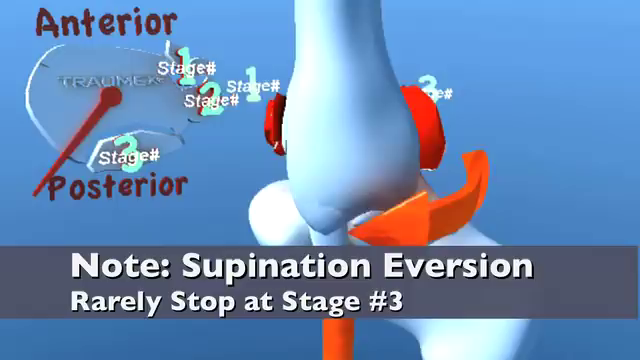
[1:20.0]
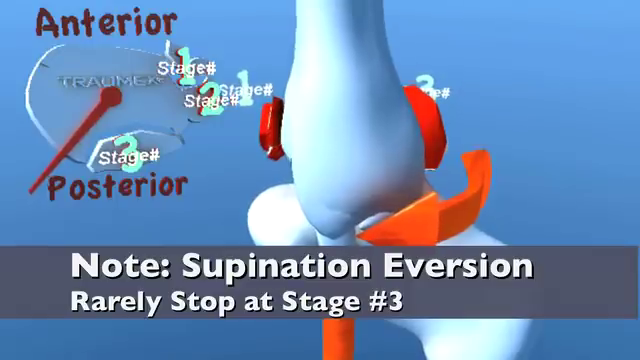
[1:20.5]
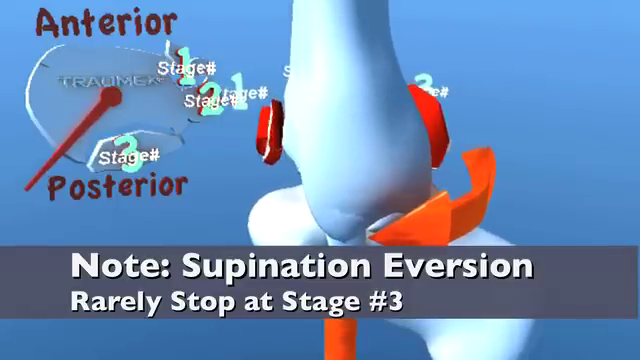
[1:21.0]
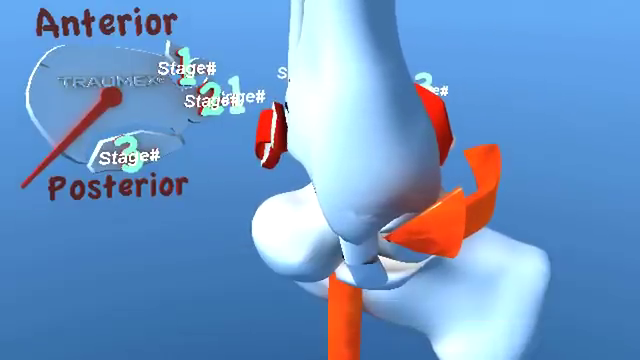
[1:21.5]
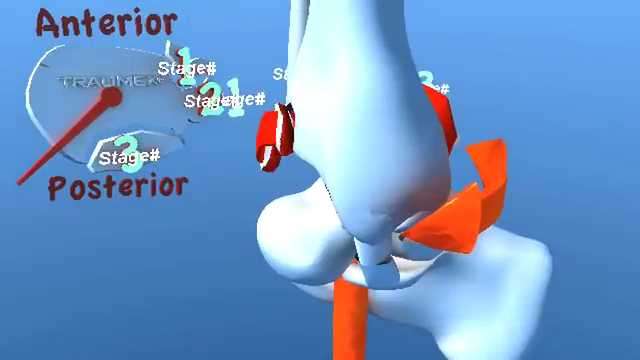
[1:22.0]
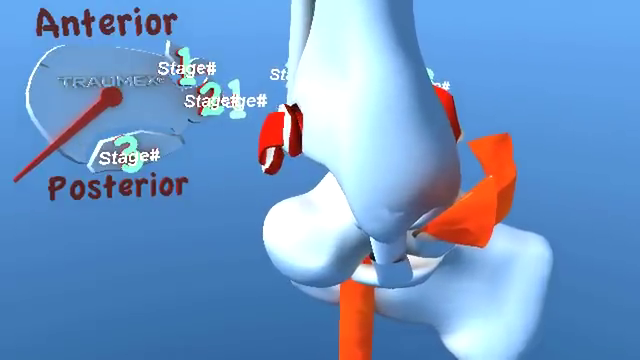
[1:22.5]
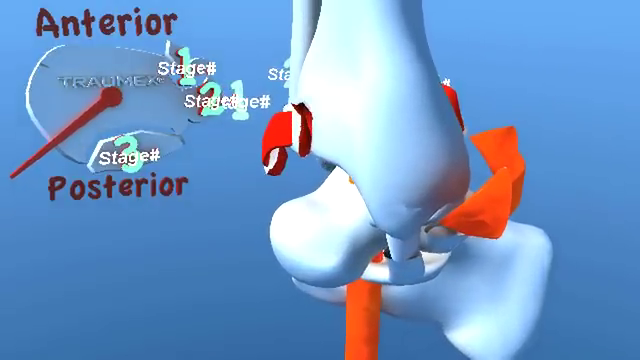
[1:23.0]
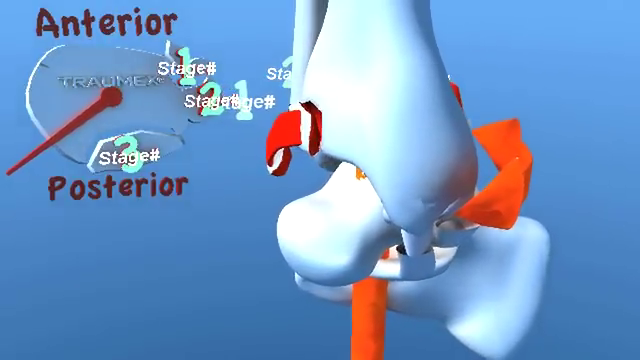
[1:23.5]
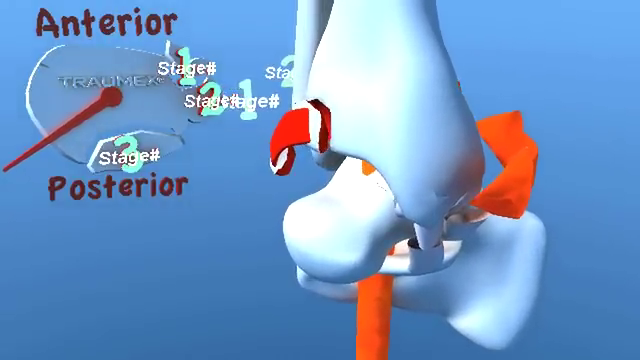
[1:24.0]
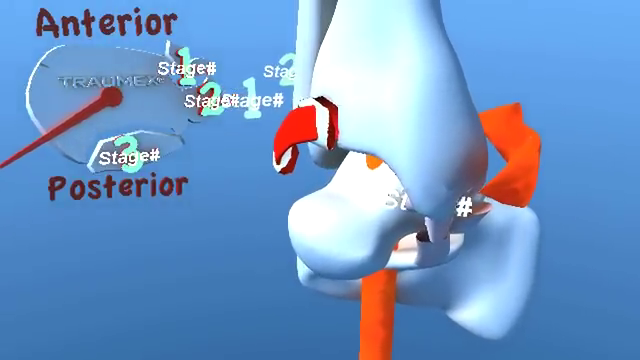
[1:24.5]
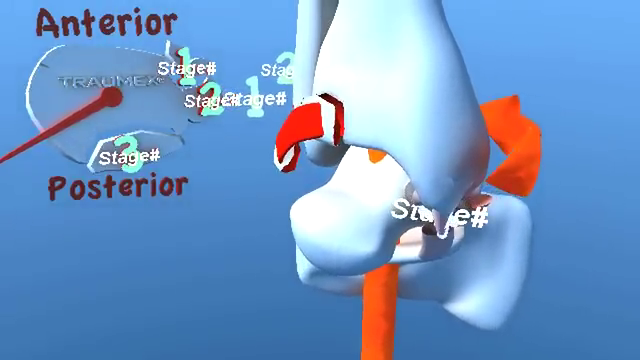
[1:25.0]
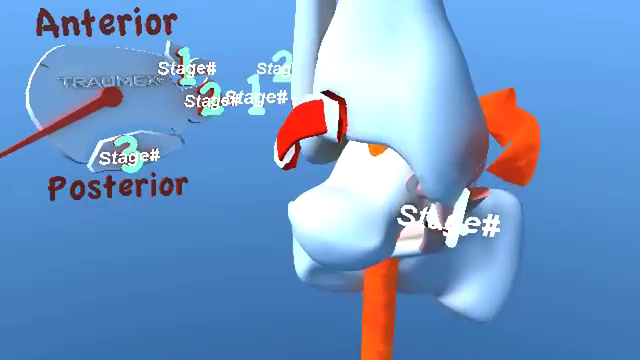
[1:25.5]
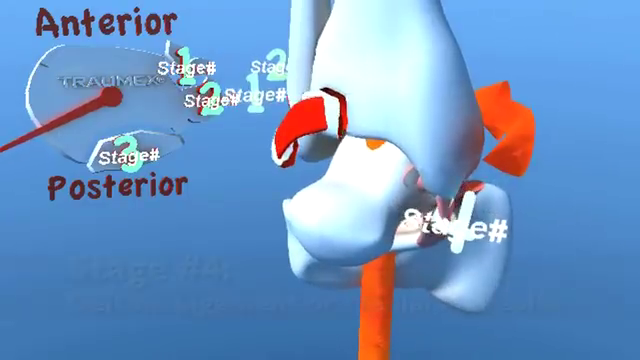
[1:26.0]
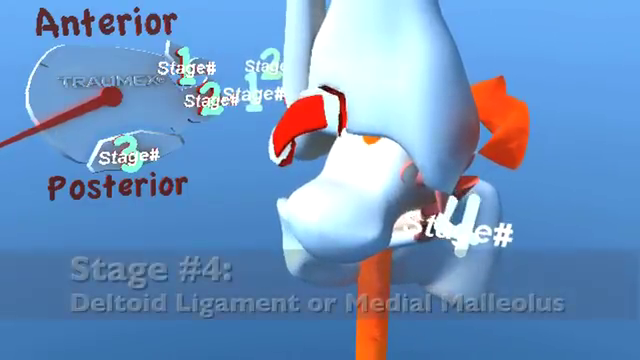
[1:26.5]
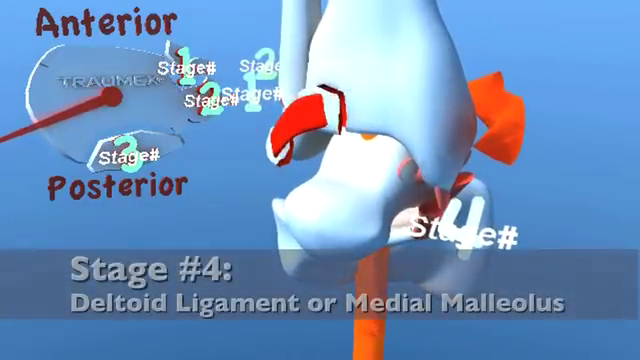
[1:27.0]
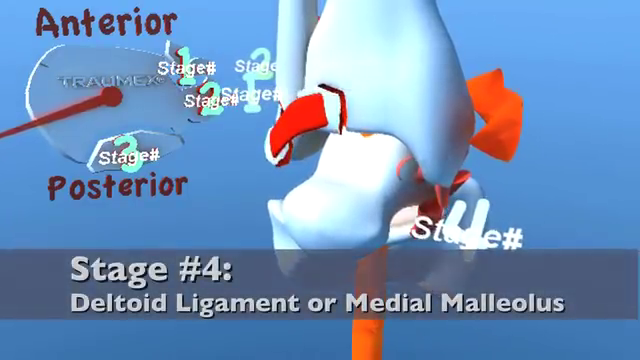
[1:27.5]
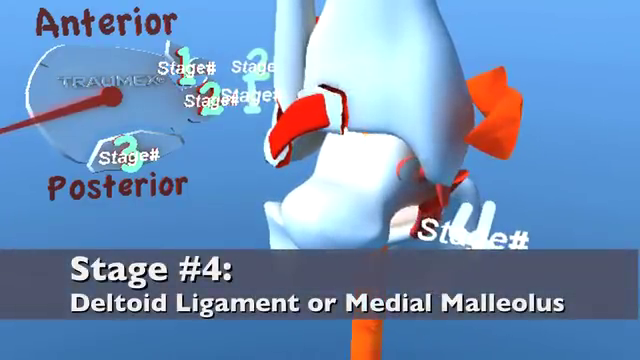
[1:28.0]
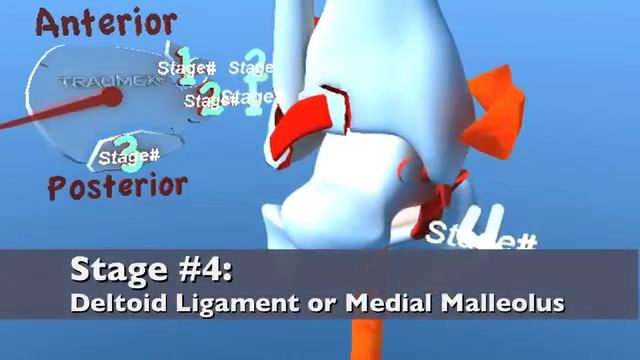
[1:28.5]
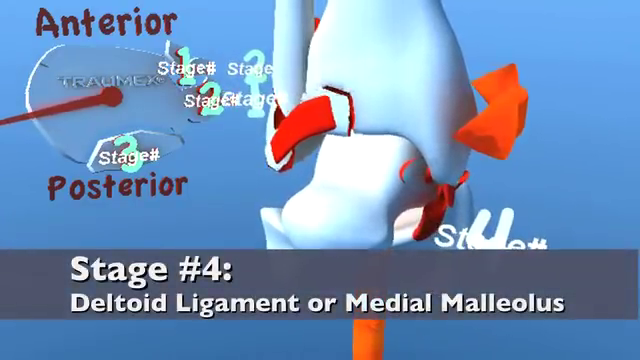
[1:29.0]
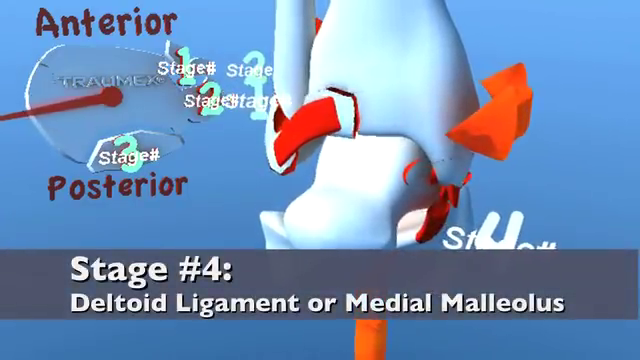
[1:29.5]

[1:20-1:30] The ankle image moves slightly to the left and becomes more centered, then the view moves down through the ankle. An orange cylinder of some sort runs through the middle of the bone structure. The clock on the left has now reached about 8 or 9 o'clock. Text in the bottom bar appears, beginning "Stage number 4, deltoid ligament". The number 4 with the word "stage" written across it appears from inside the bone fracture, moves to the right of the screen and then comes to the center, in line with the bone again.